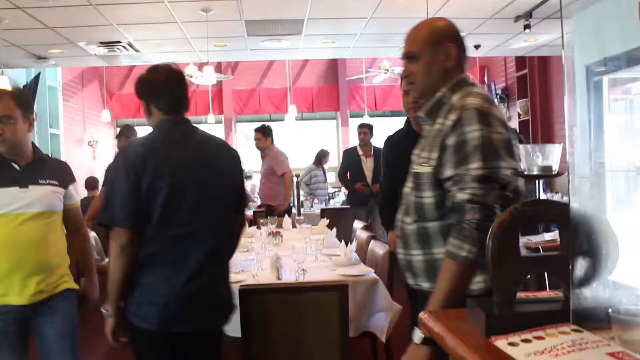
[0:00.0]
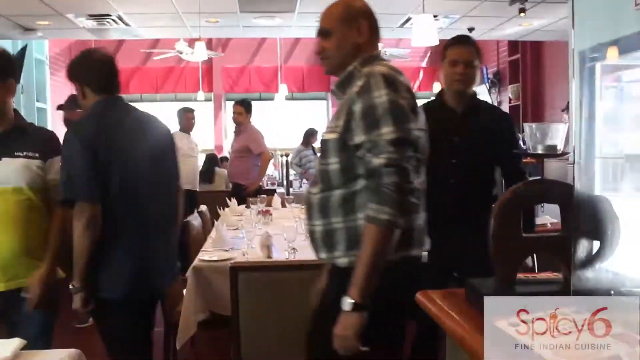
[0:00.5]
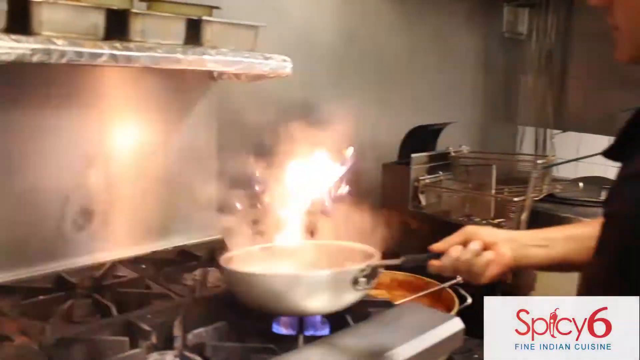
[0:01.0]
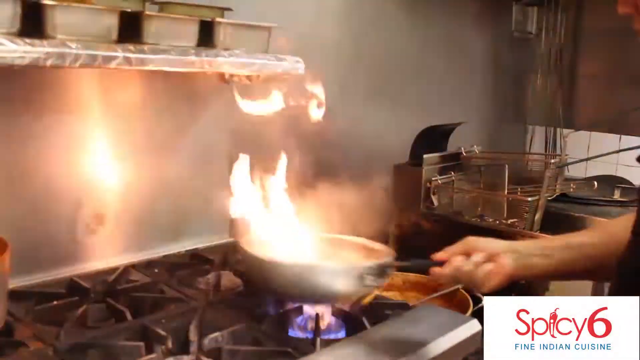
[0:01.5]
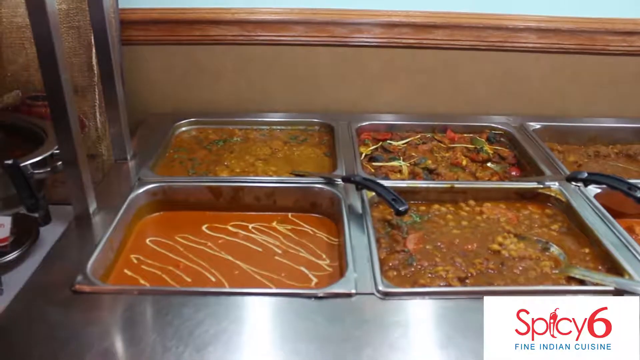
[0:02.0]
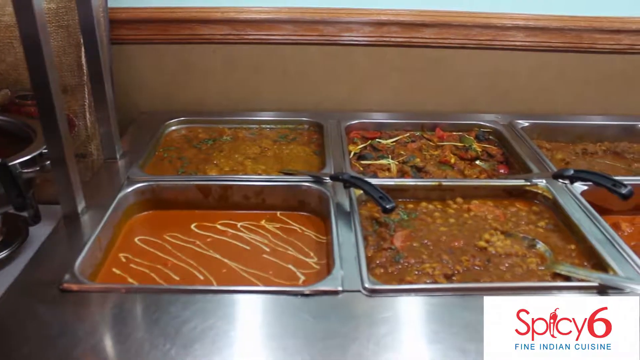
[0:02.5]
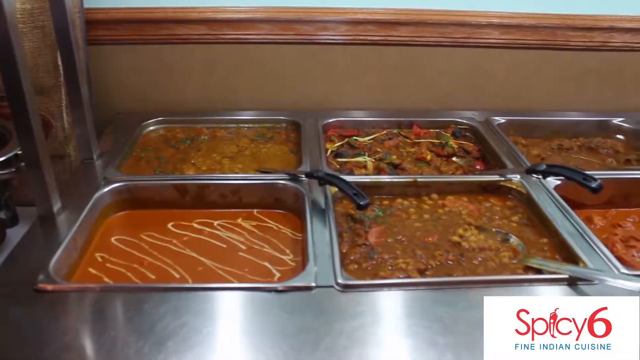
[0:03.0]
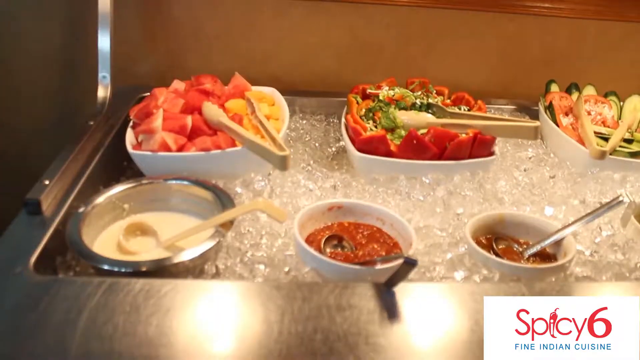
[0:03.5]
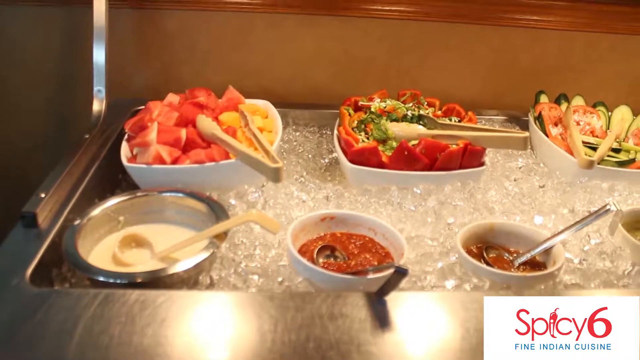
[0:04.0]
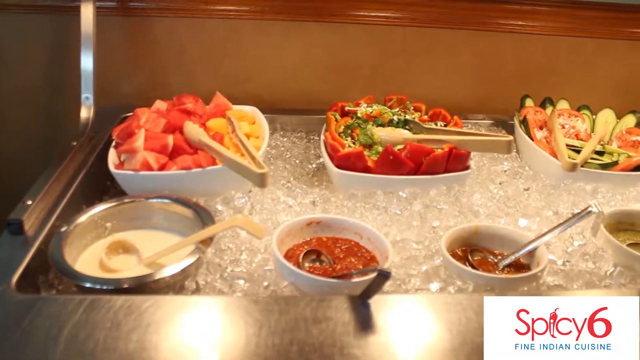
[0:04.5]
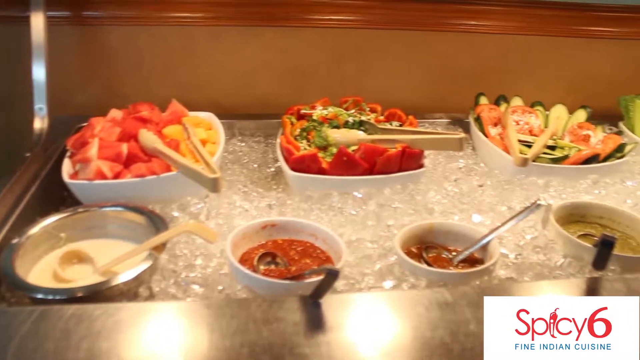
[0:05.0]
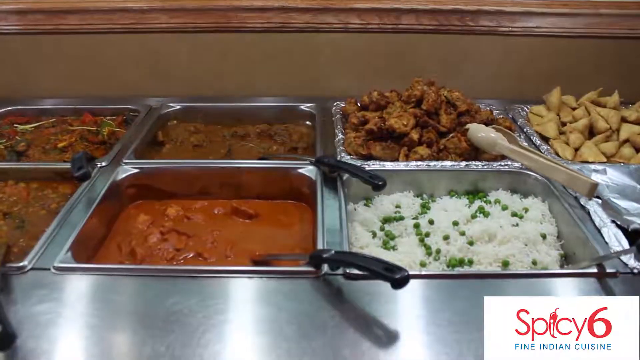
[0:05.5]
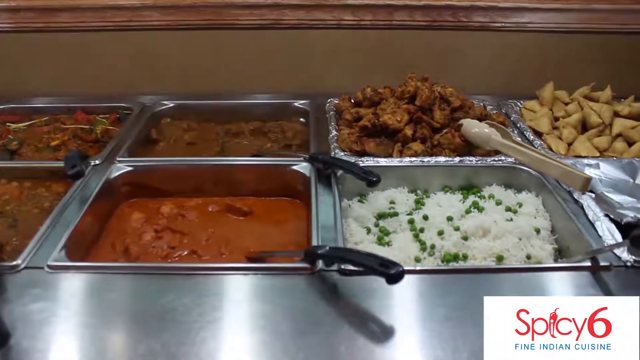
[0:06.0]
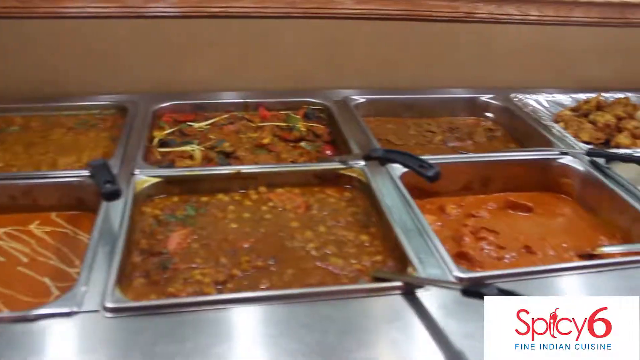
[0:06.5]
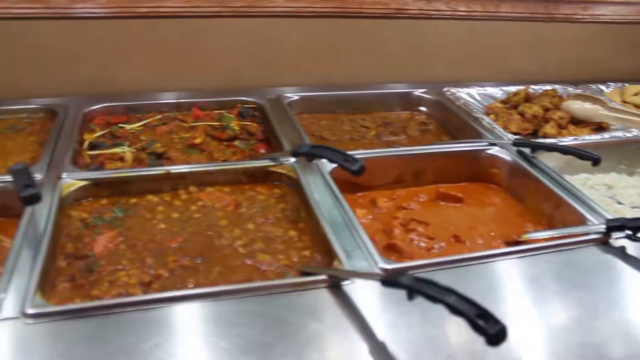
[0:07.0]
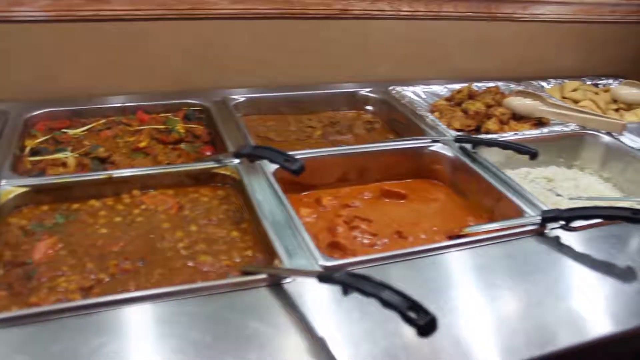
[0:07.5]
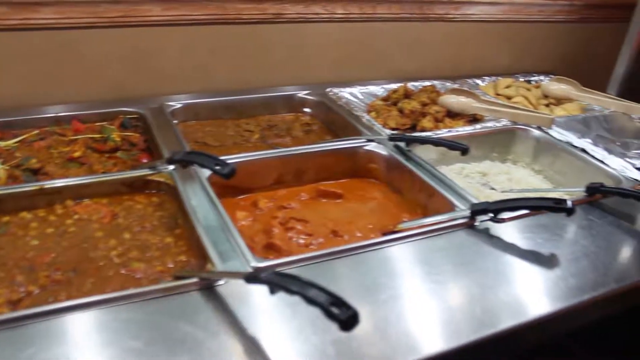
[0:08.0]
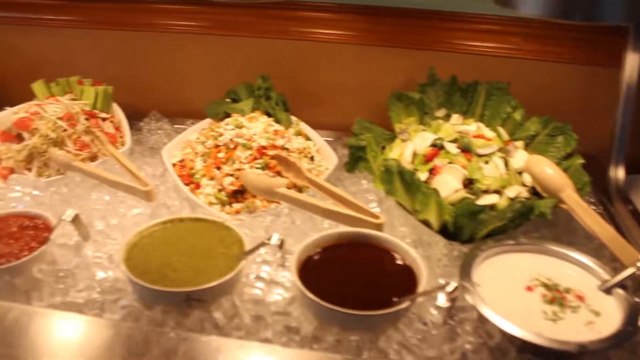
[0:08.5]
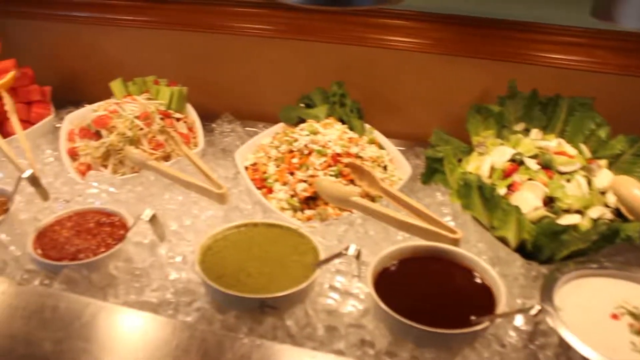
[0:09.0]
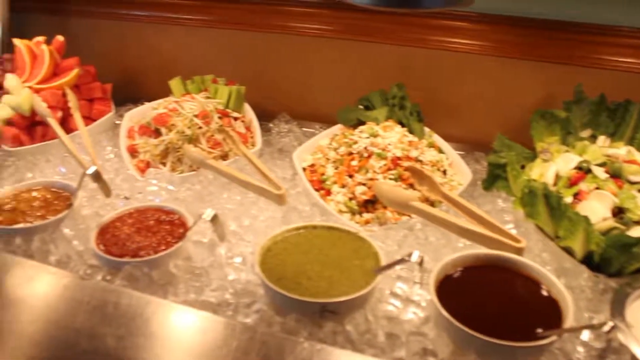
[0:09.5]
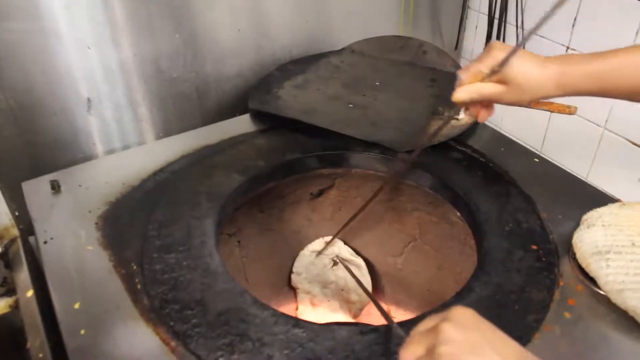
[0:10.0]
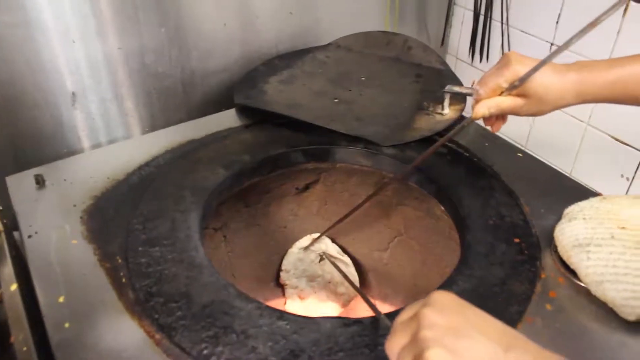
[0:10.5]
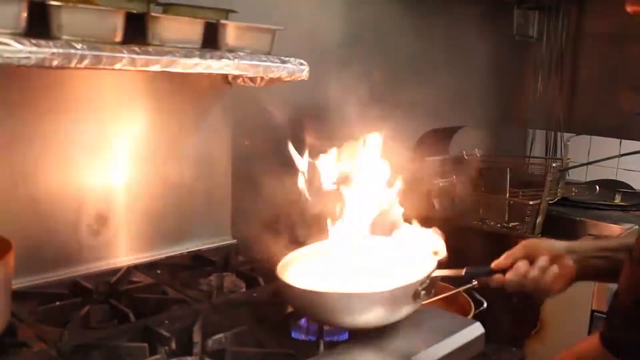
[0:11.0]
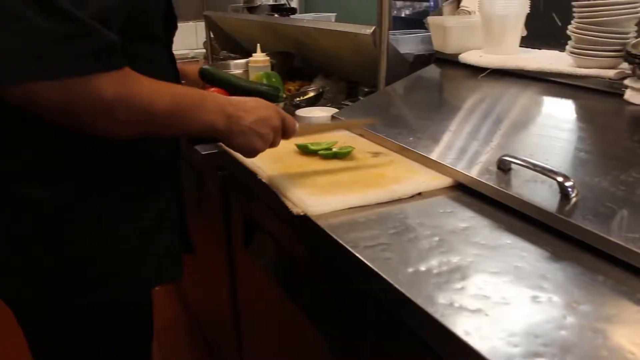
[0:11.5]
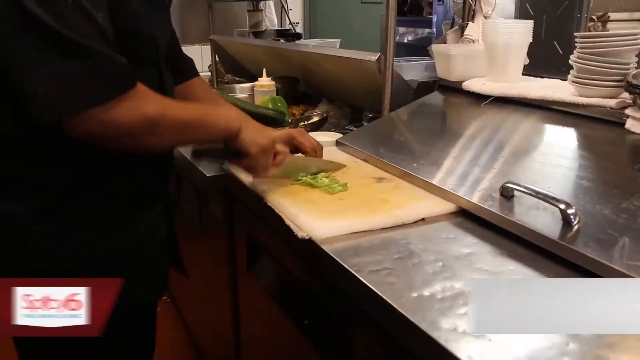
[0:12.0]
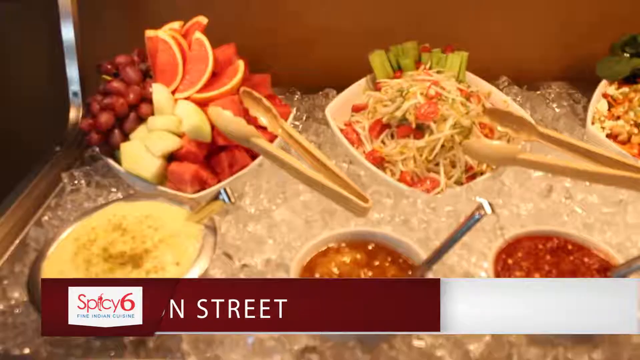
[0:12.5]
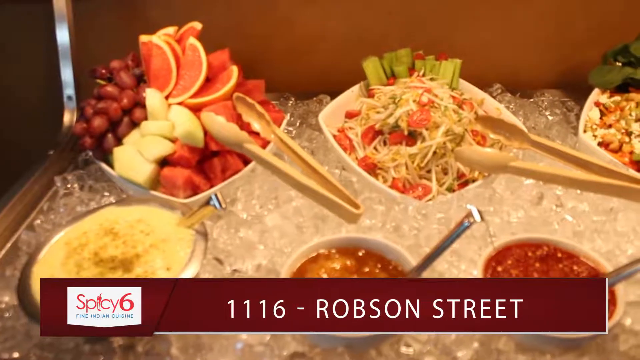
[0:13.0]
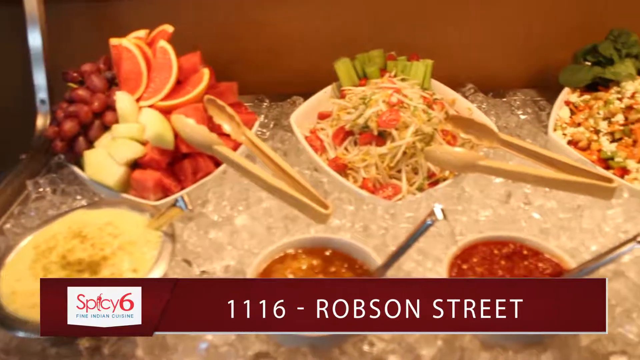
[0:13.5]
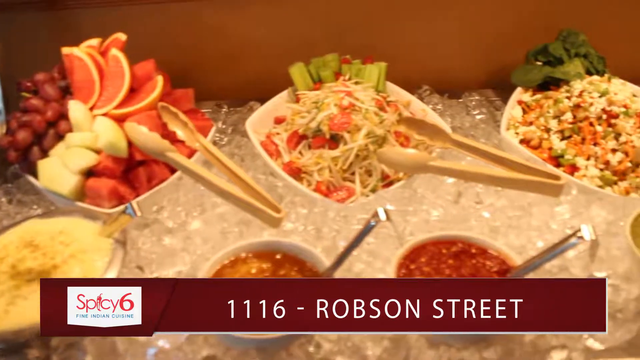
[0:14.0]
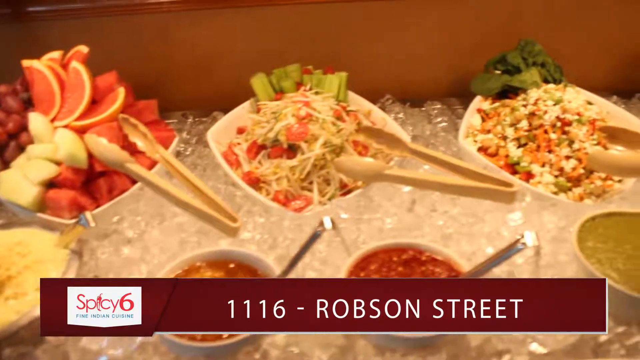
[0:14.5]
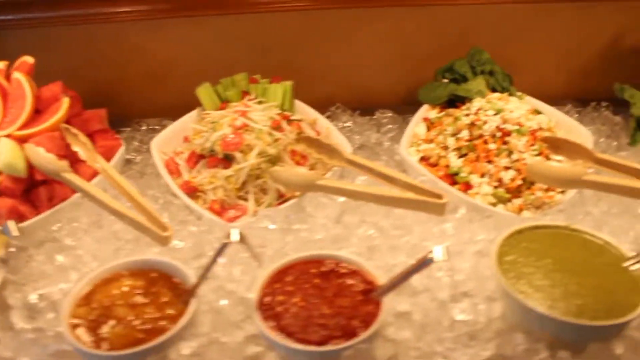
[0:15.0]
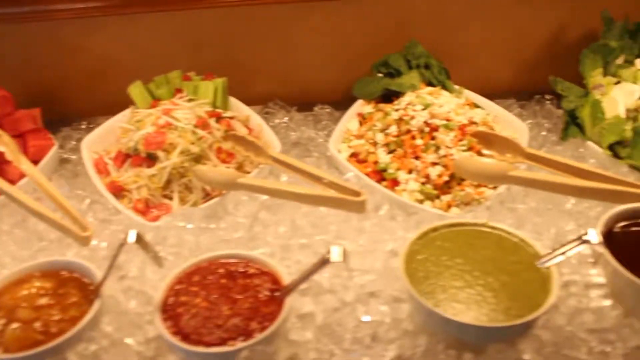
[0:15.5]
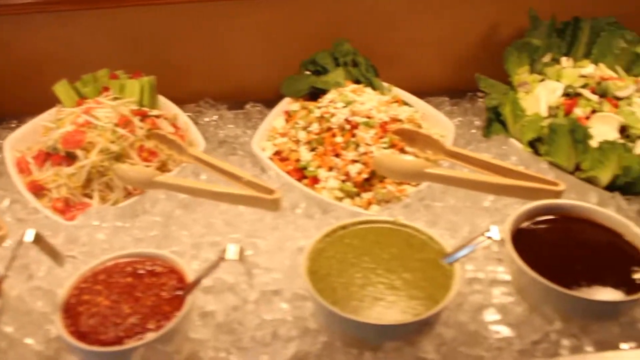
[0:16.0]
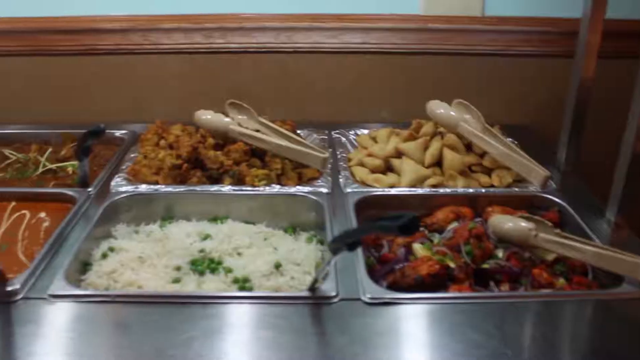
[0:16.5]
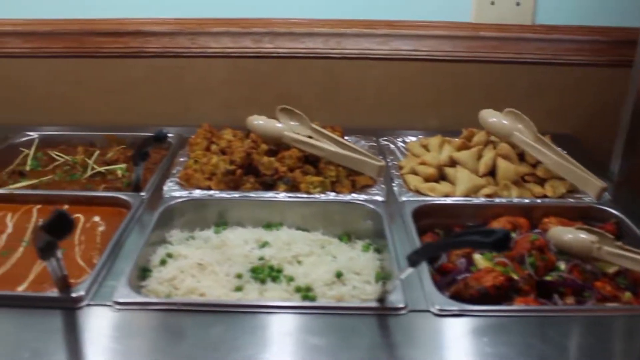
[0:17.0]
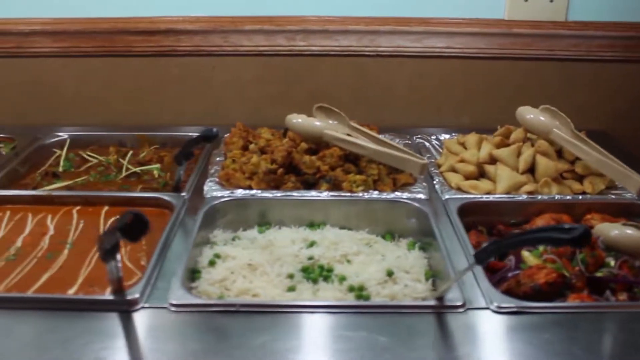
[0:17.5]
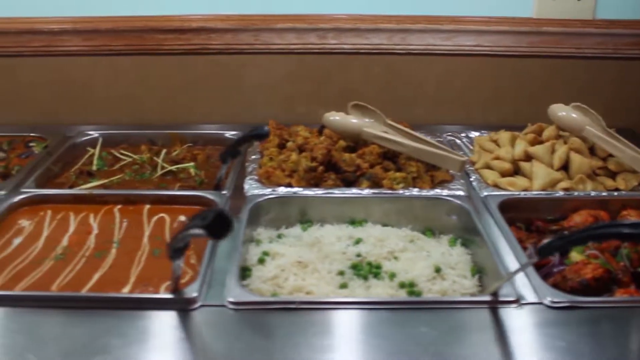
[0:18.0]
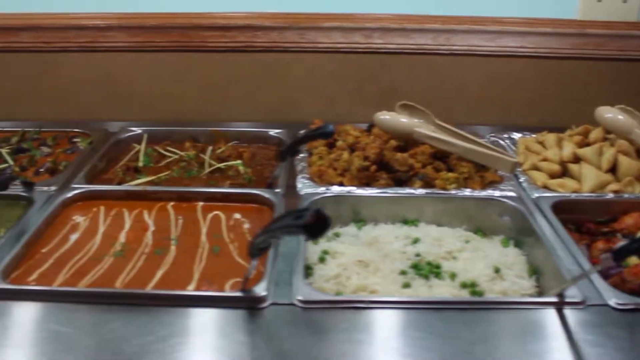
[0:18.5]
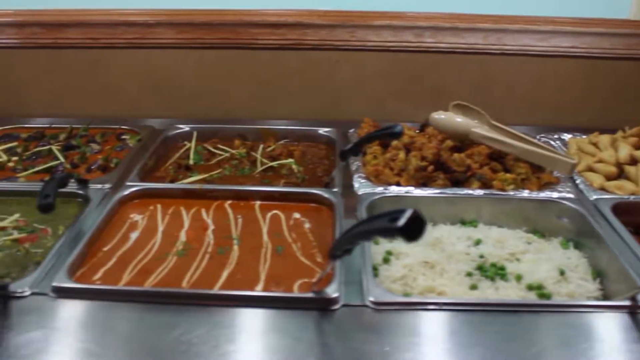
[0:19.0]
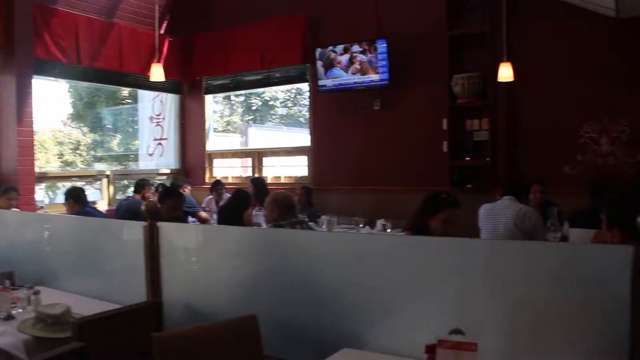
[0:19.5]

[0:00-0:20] A bunch of people walk around inside a restaurant. A table in the middle has a white tablecloth, brown chairs all around it, and plates and glasses all over its top. Next, someone in a kitchen holds a silver frying pan and shakes it over a stove, with flames coming out of the top of the pan. The scene switches to food in rectangular stainless steel containers: different kinds of beans mixed with corn, and an orange-colored liquid with white stripes in it. Several of the containers have utensils sticking out of them. Another display follows, with bowls of different types of food set down inside a layer of ice, which keeps them cold. In the bottom right is a white square with red letters that say "spicy six." The video goes back to the food in the stainless steel rectangular containers, then back to the section with ice underneath the food. Then there is some kind of cooking container: someone holds very long sticks that look like extra long chopsticks, gripping something inside a round container where it is being cooked. Someone then uses a cutting board to cut up a green vegetable, holding a knife in one hand. A red banner comes up across the bottom with white letters reading "116 Robson Street," and on its left side is a white square that says "spicy six" inside it. The camera pans across the dishes of food in the section with ice underneath, and then the video returns to the food in the stainless steel containers.